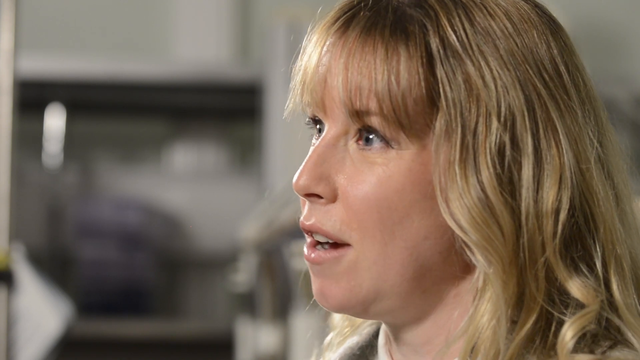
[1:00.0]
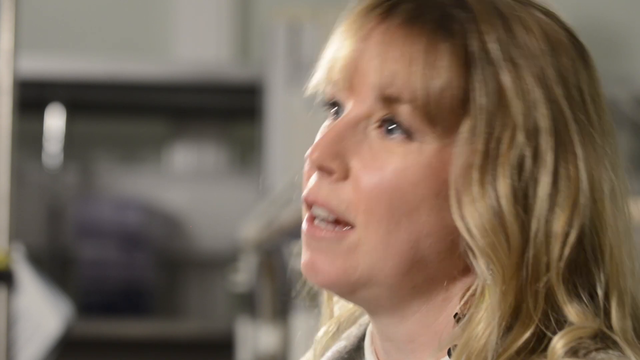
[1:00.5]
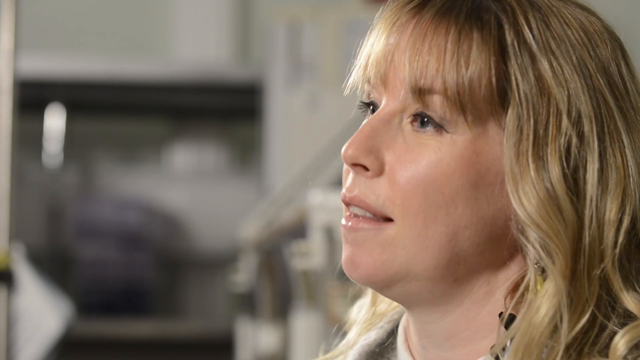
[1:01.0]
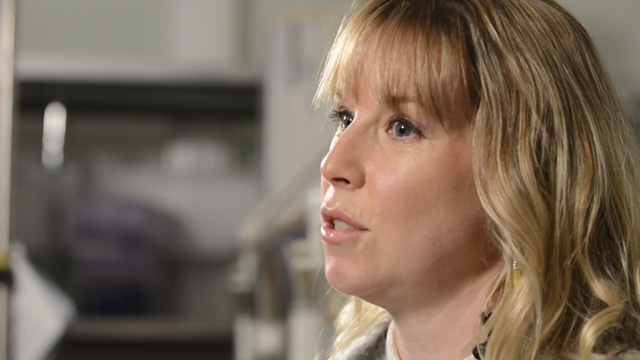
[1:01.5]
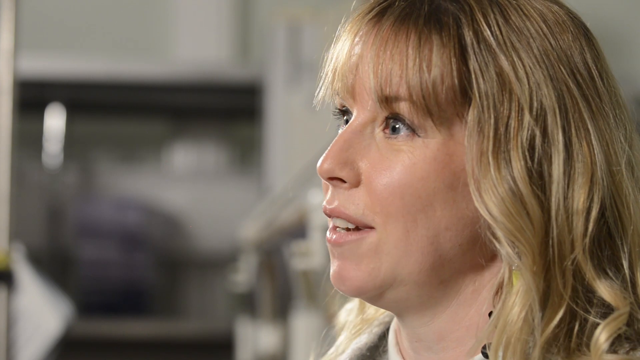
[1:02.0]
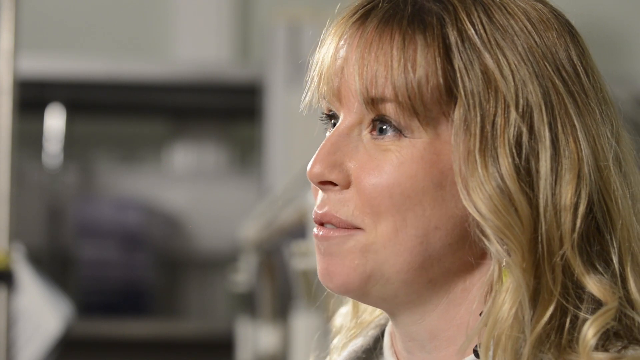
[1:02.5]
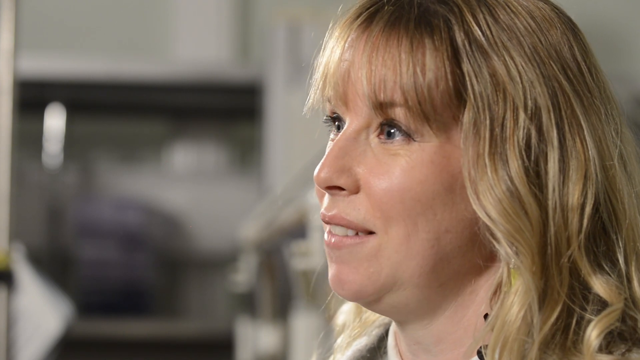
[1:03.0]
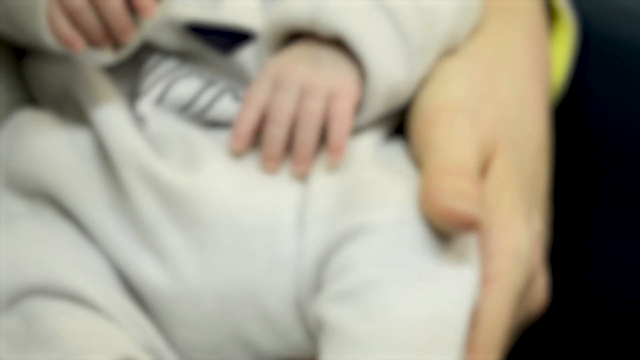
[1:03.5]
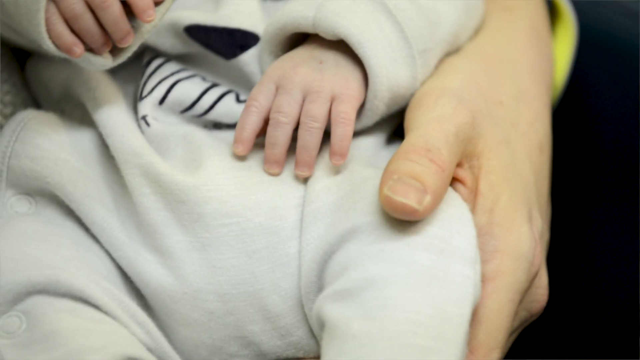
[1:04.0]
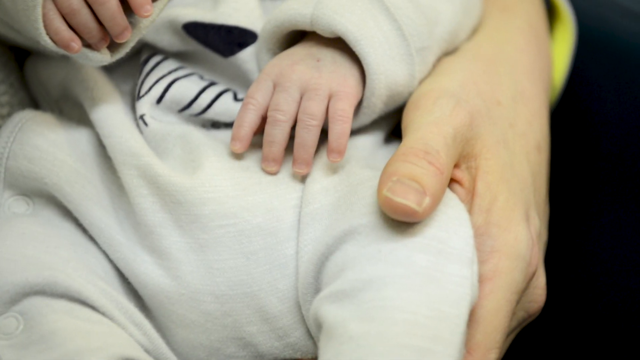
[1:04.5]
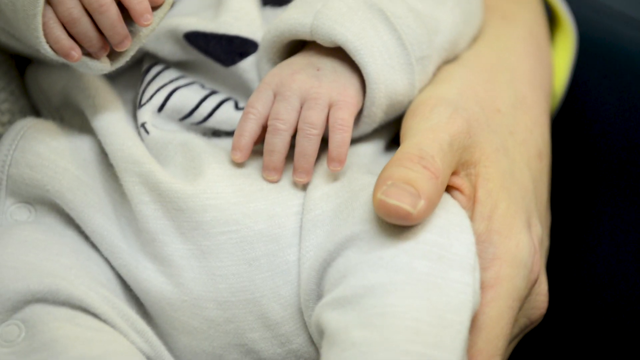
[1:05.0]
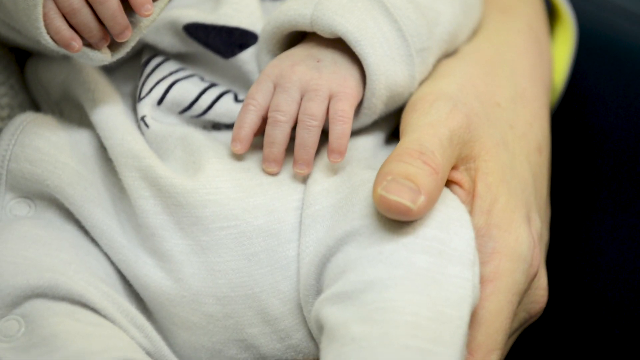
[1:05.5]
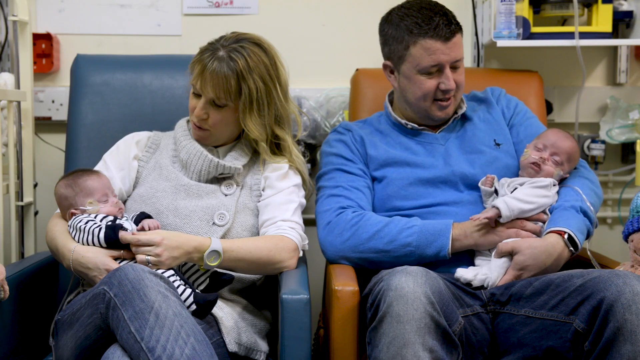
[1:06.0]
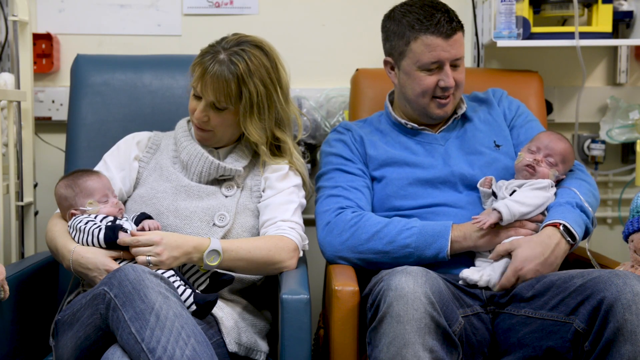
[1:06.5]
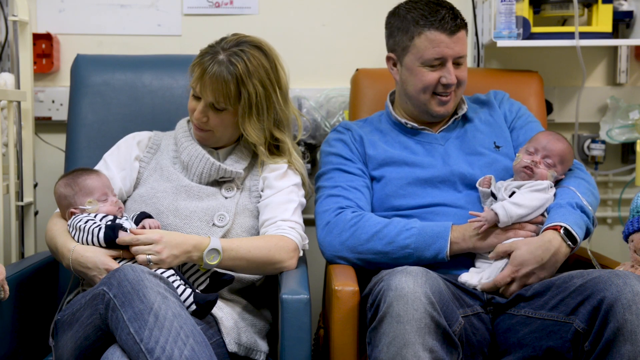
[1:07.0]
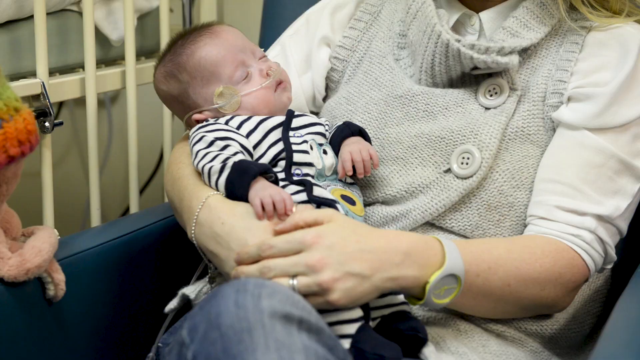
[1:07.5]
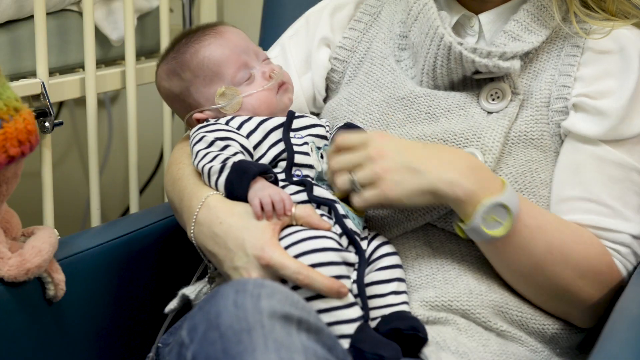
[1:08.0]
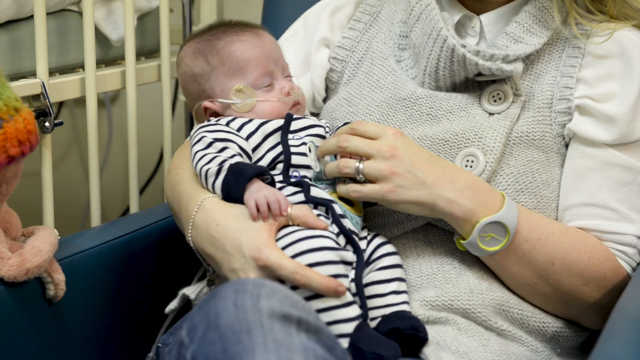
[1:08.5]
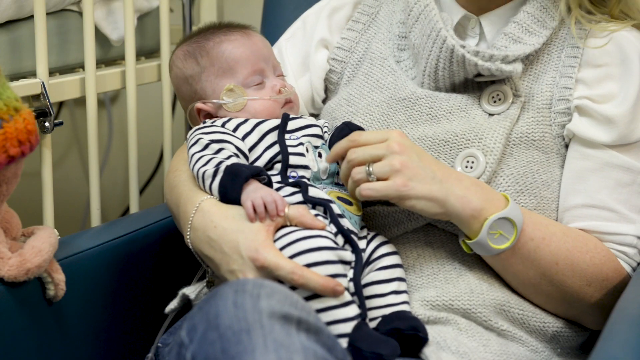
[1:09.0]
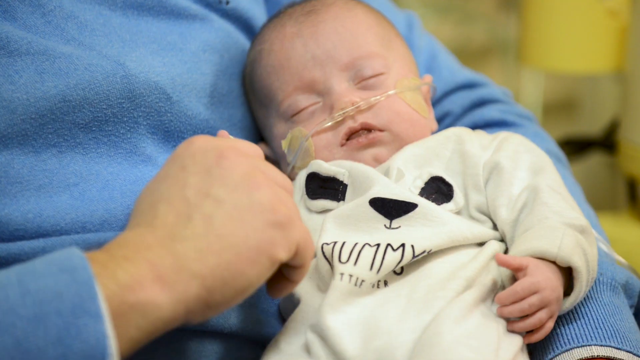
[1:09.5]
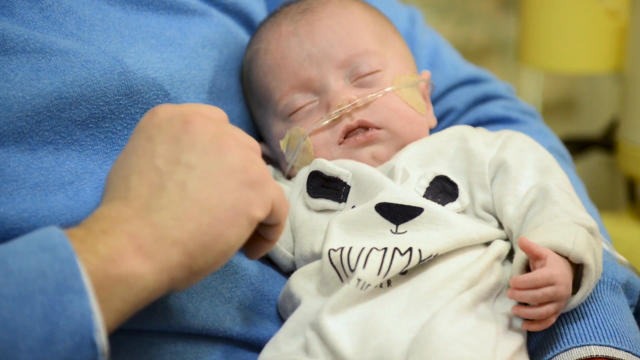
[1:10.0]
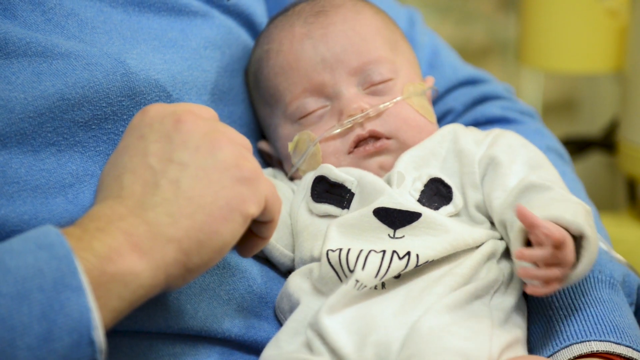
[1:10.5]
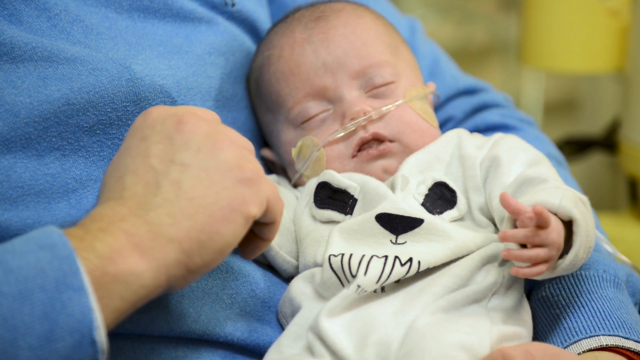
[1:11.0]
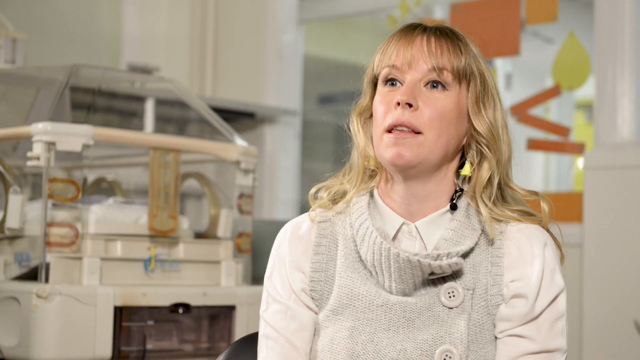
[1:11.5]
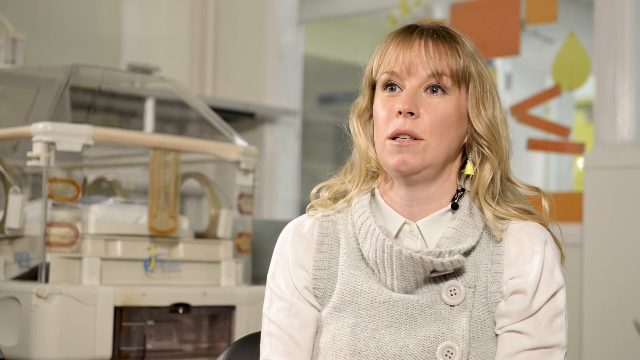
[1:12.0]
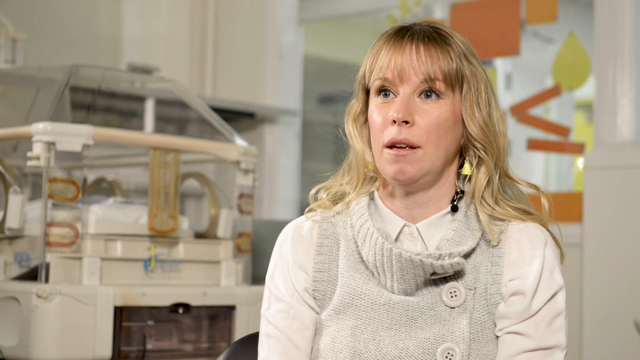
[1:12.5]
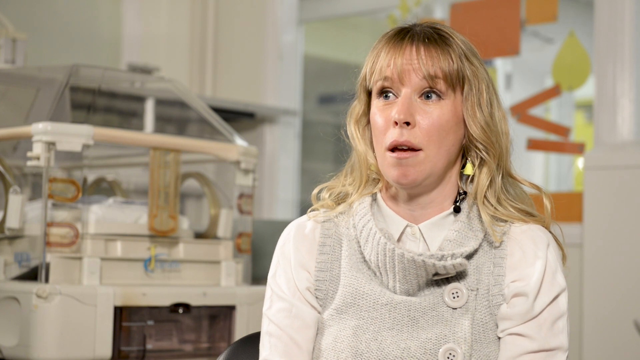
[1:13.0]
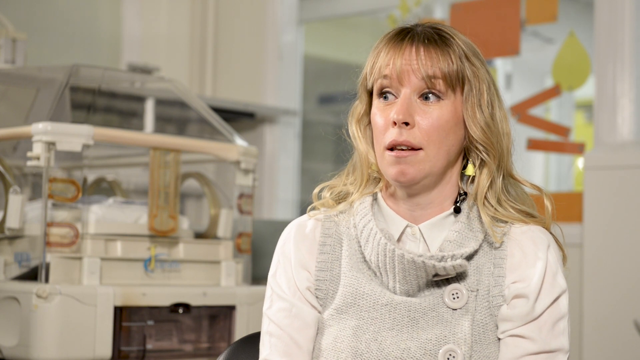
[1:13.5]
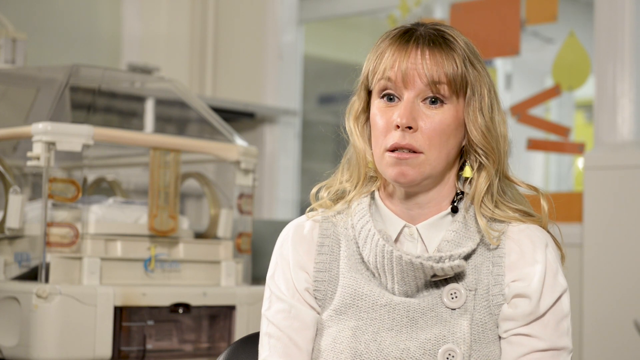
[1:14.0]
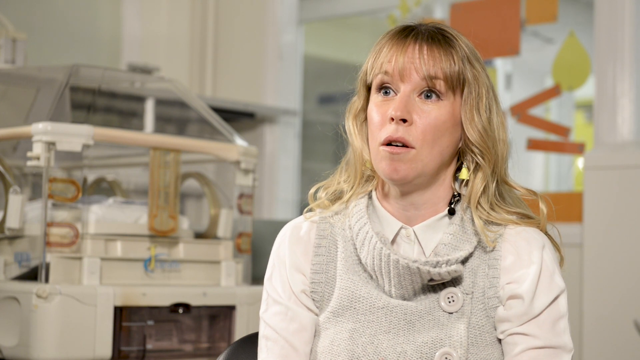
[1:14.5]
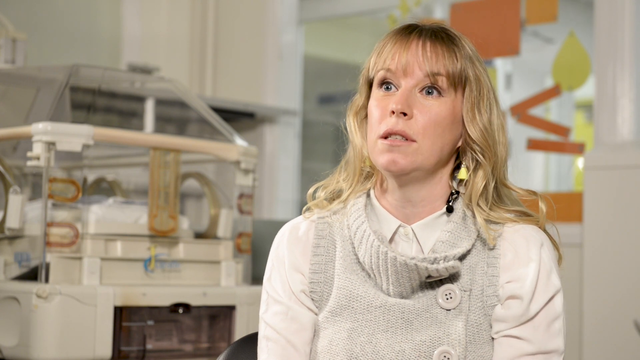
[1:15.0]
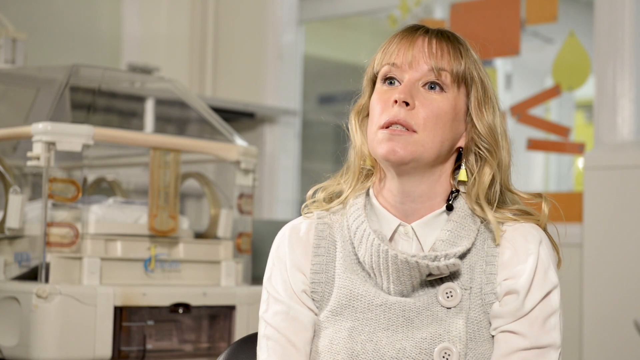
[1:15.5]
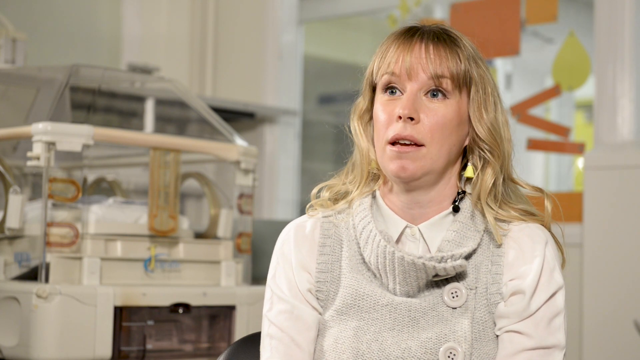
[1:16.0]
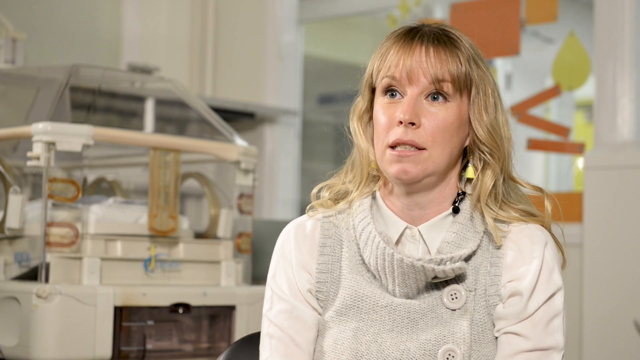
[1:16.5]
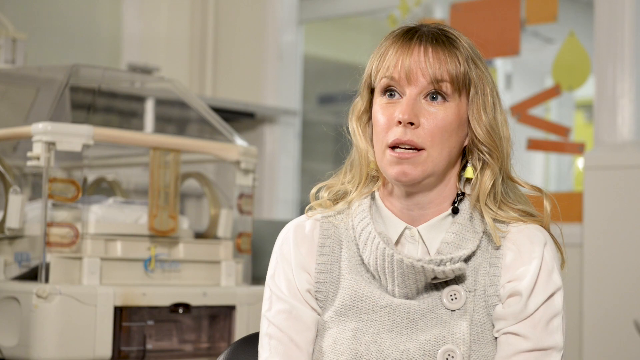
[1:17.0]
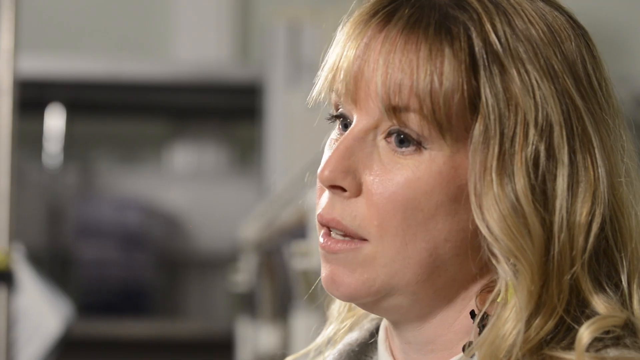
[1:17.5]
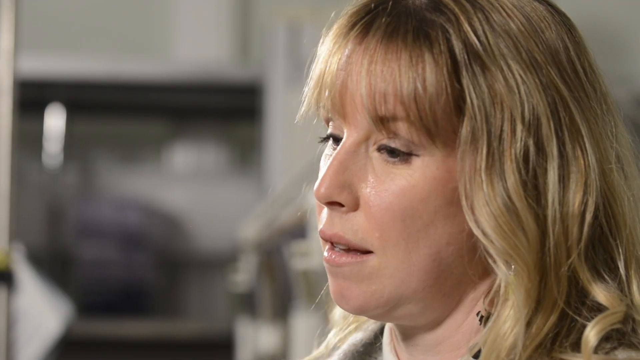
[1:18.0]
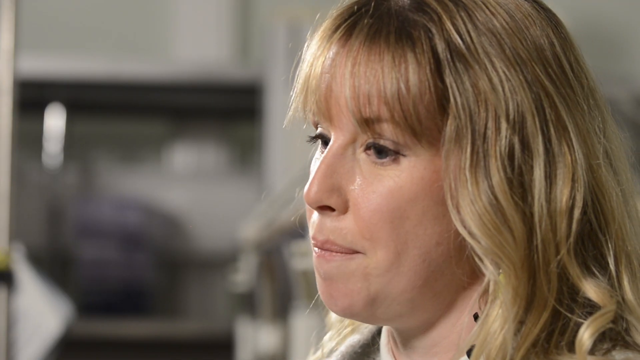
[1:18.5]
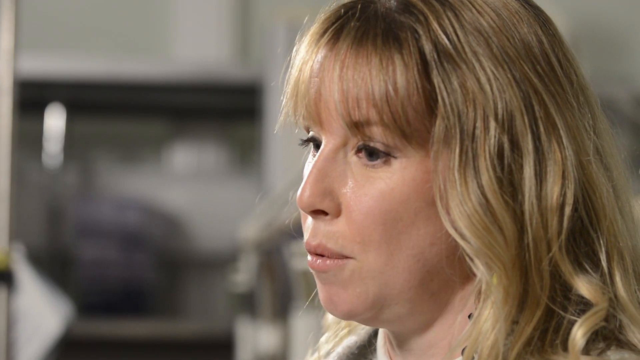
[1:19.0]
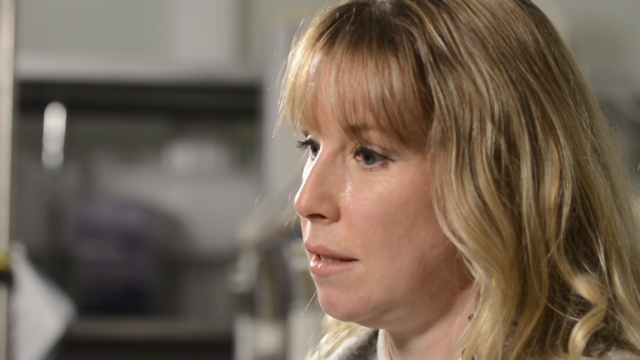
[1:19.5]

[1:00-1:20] The shot of Jenny remains quite zoomed in as she talks and smiles slightly. A close-up follows of a baby wearing a onesie with what looks like a panda or some type of bear on the front. The baby's tiny hands are visible, and the mum's hand is around the baby, so it is apparently in her lap. A more zoomed-out shot shows the mum and dad both sitting in chairs, each with one of the twins propped on their lap. The dad wears blue jeans and a blue jumper with a shirt underneath; the mum wears blue jeans, a white shirt and a grey pullover with big buttons; both babies wear onesies. The camera zooms into the baby the mum is holding, which wears a black and white onesie, then zooms in on the other baby in the dad's arms, whose panda onesie says "mummy". It then zooms back in to Jenny, who continues talking in the ICU room, zooming quite far into her face.